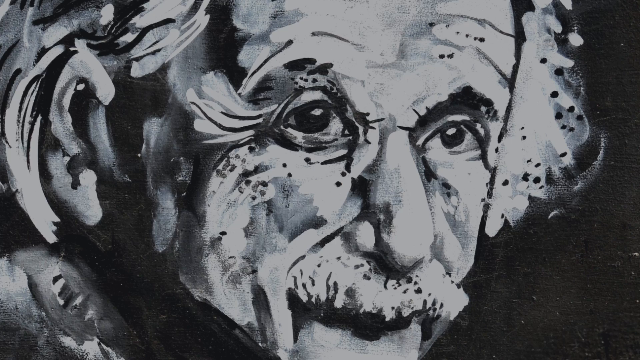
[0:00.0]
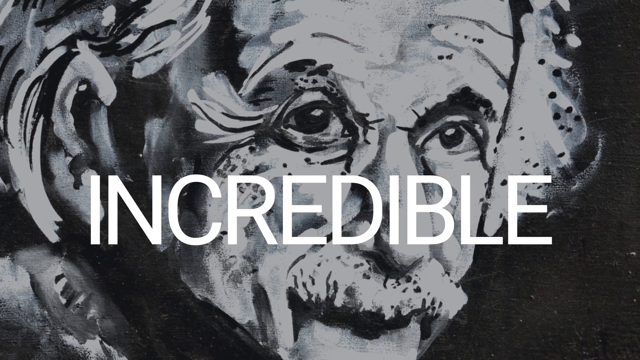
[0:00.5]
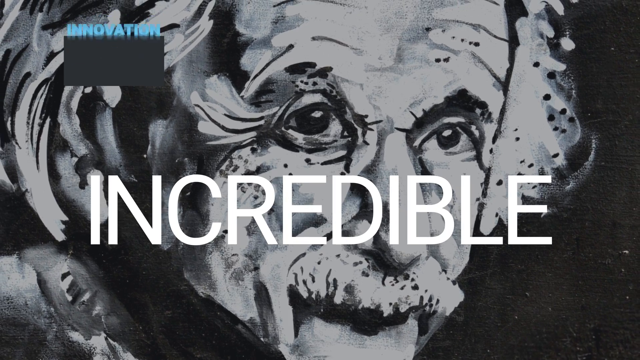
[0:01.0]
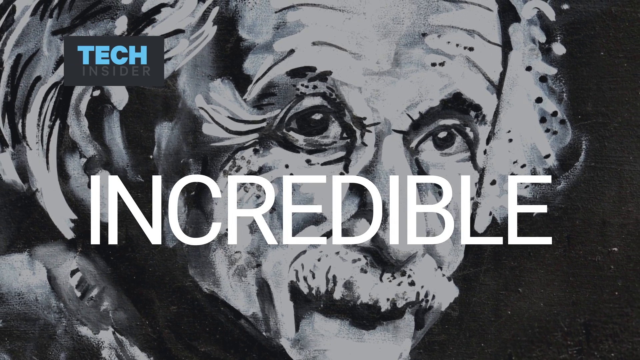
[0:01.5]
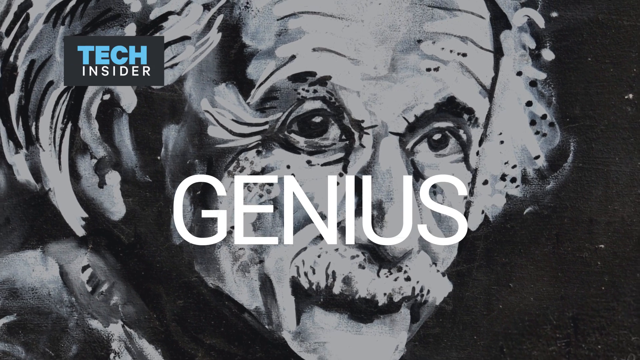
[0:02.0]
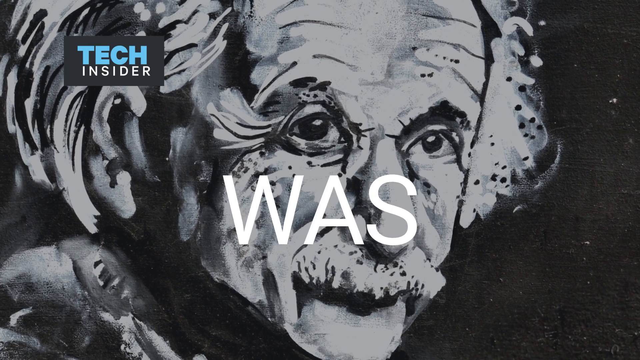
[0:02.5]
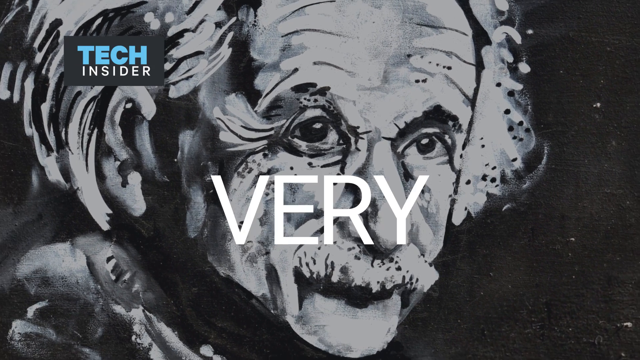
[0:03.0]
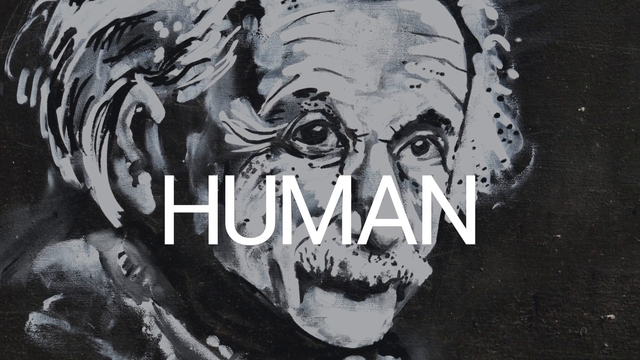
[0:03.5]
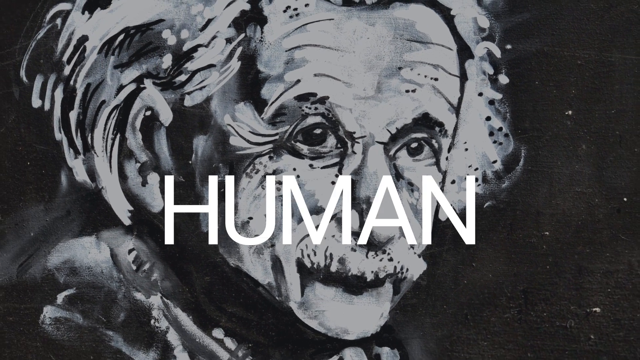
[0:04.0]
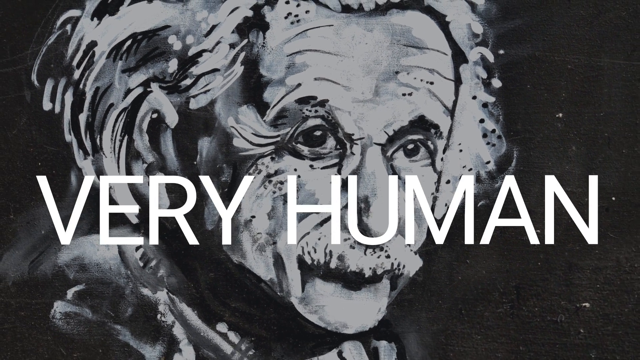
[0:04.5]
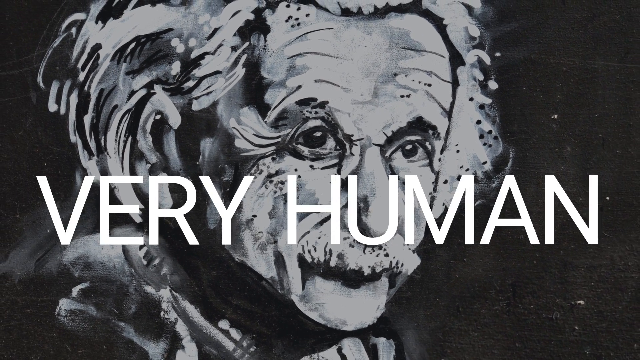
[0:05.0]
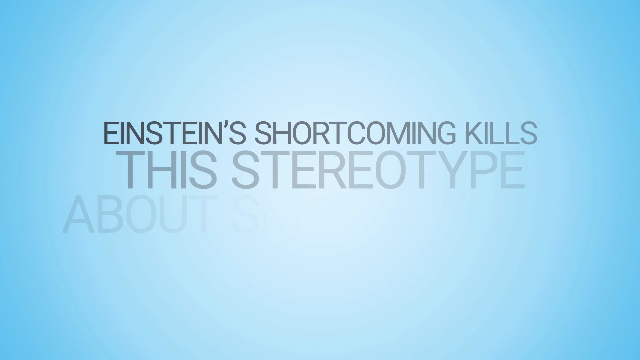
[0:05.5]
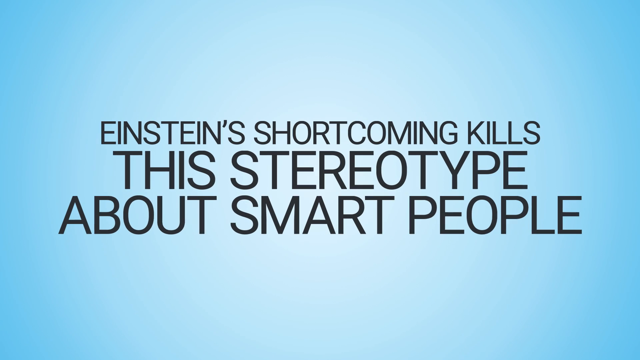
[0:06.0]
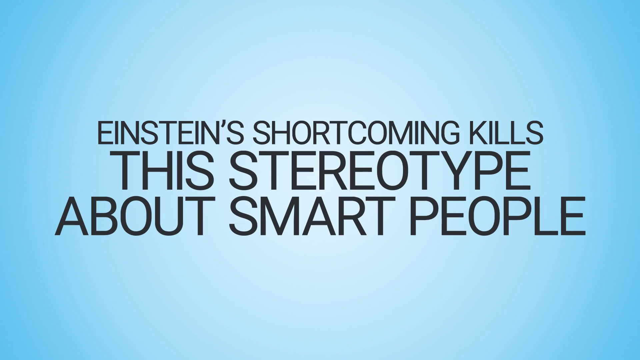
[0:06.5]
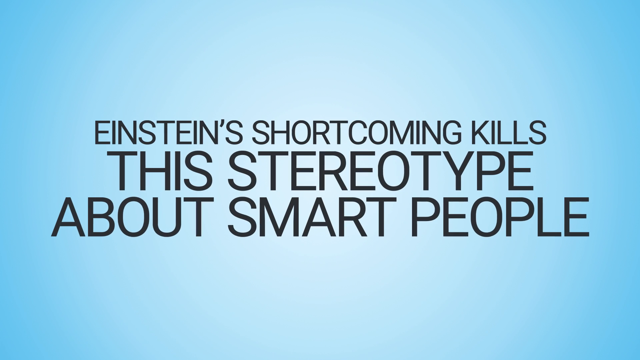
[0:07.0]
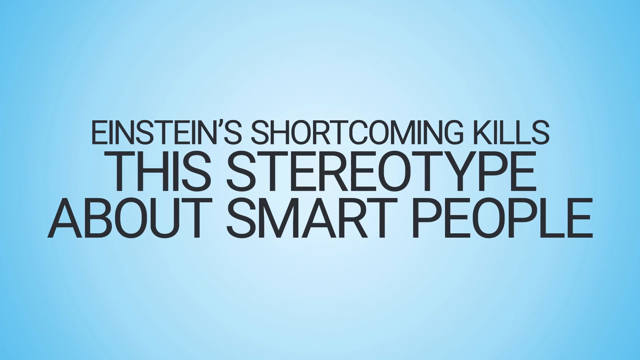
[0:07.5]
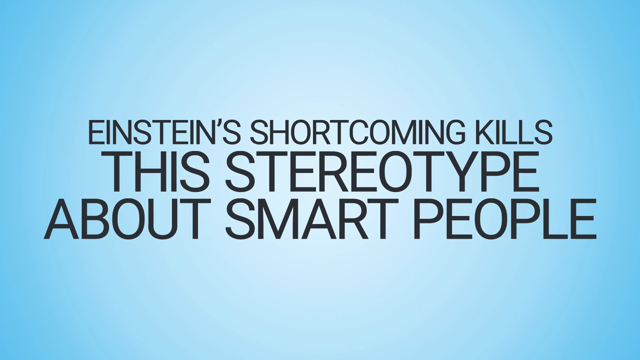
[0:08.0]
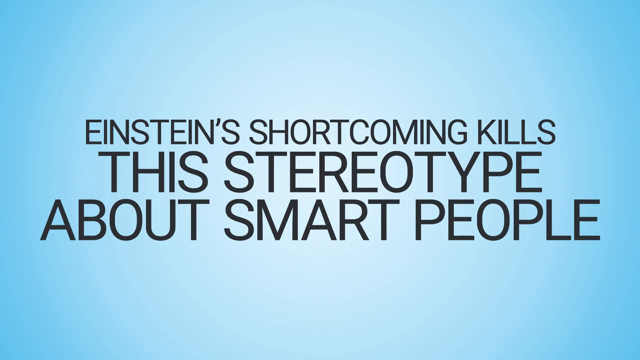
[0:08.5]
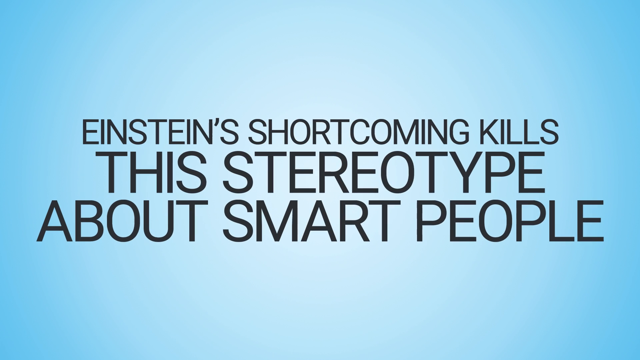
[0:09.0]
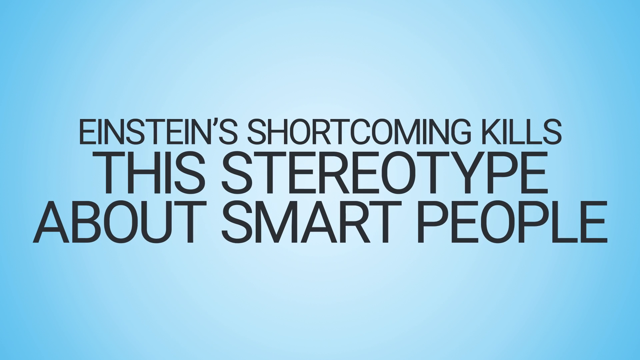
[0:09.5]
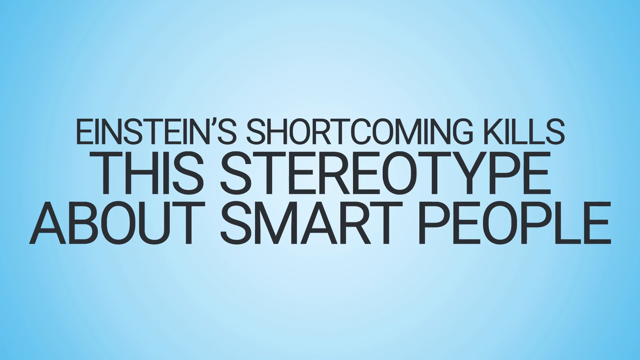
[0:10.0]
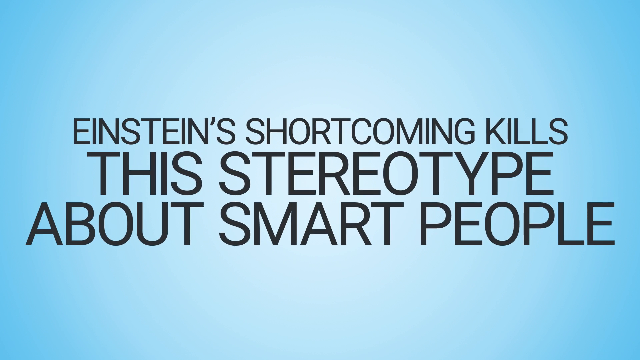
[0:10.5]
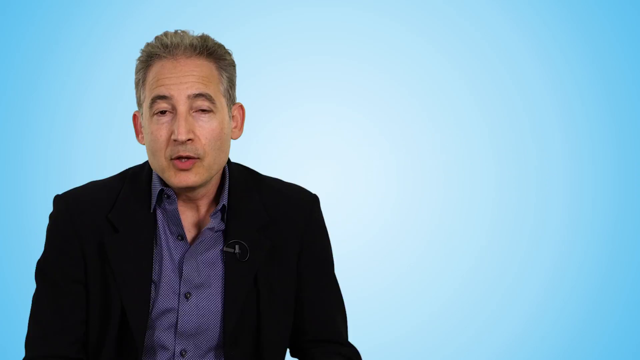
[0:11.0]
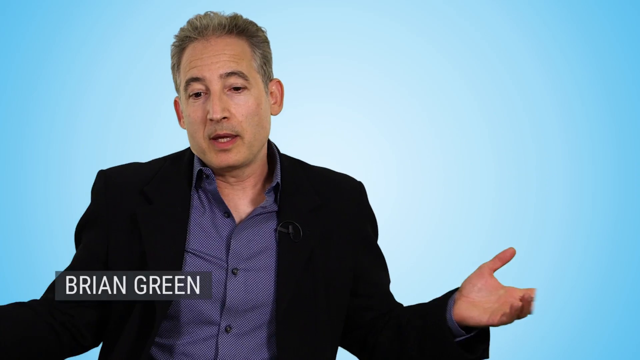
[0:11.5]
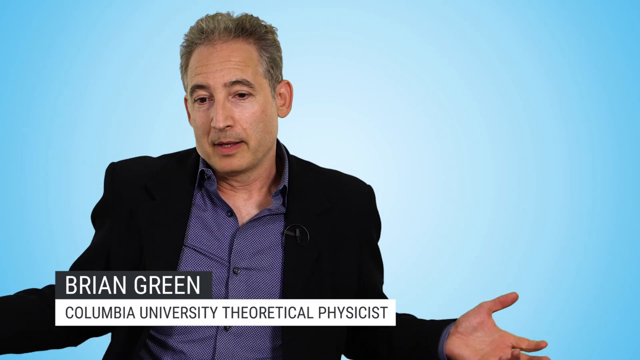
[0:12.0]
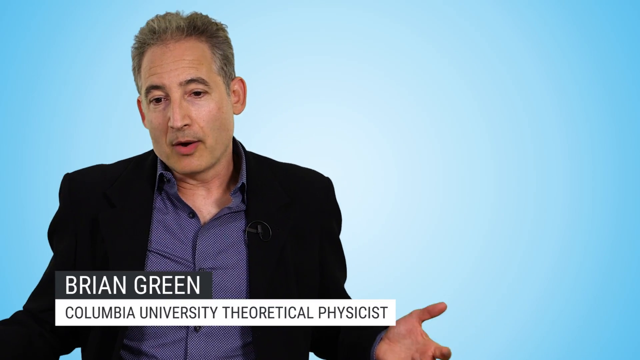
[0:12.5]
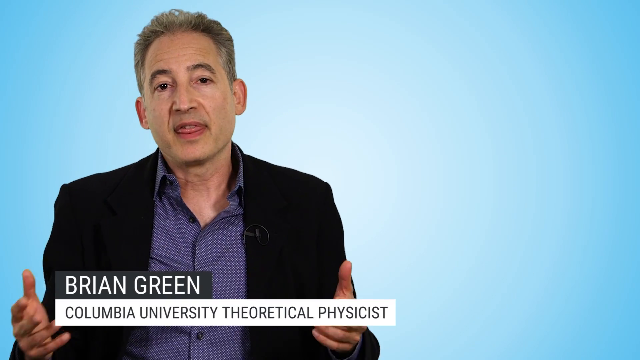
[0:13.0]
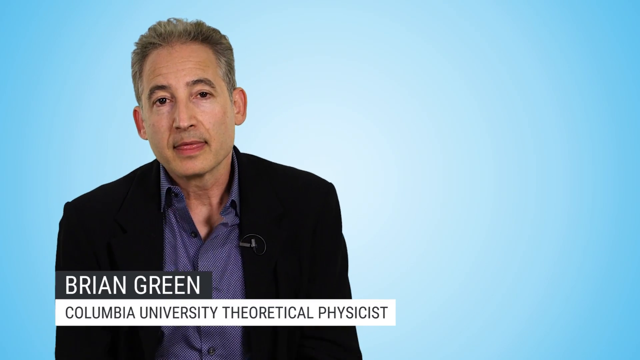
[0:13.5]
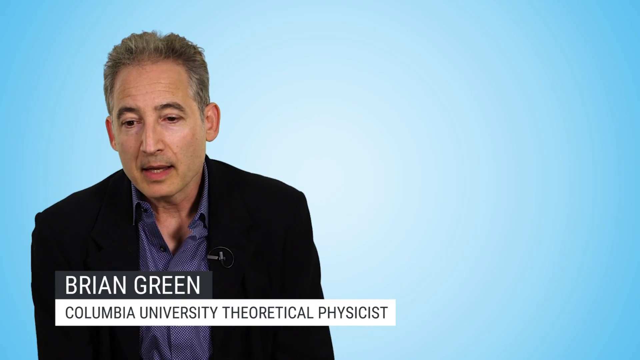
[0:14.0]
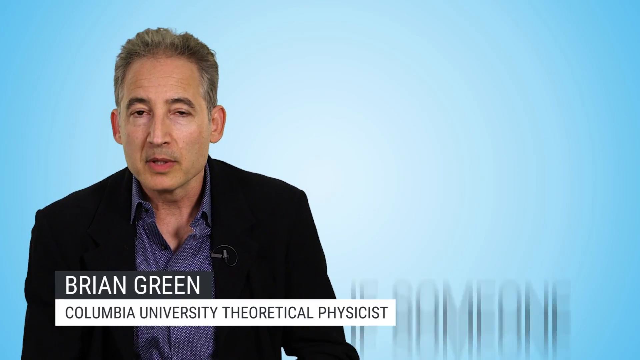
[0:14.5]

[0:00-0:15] The video opens with an art piece of Albert Einstein showing his face in a somewhat drawn style, with the text "this incredible genius was still very human." A logo at the top left reads "Tech Insider." The scene then changes to a blue screen with black words reading "Einstein's shortcoming kills this stereotype about smart people." Next, a man named Brian Green appears: a middle-aged white man with somewhat graying hair, wearing a black jacket and a purple shirt. Text describes him as "Columbia University theoretical physicist," and he begins to talk. There is nothing in the background except the blue screen.